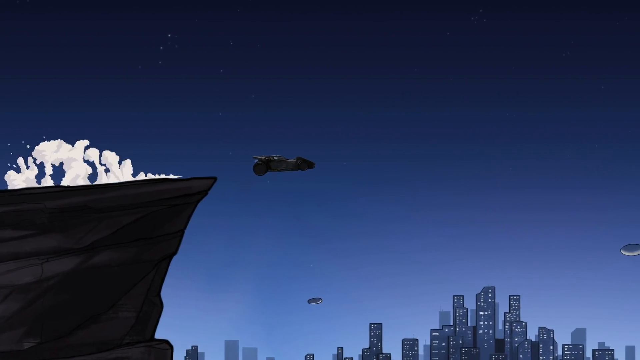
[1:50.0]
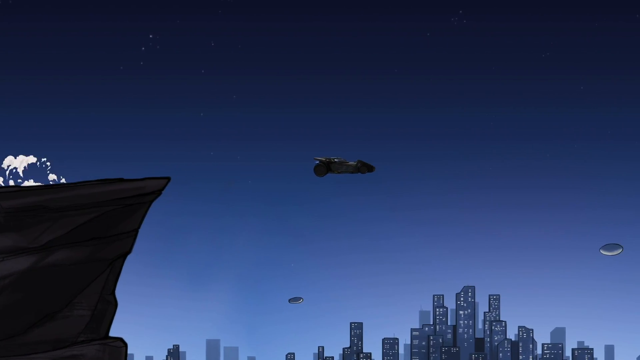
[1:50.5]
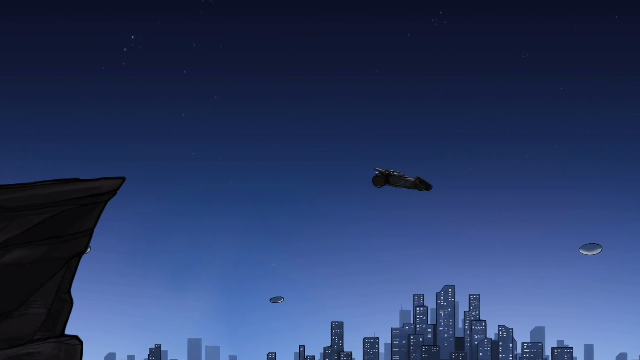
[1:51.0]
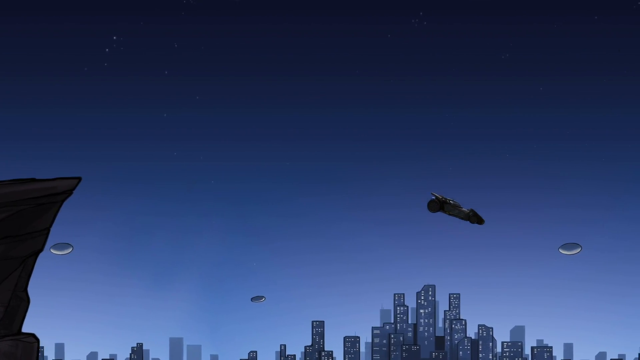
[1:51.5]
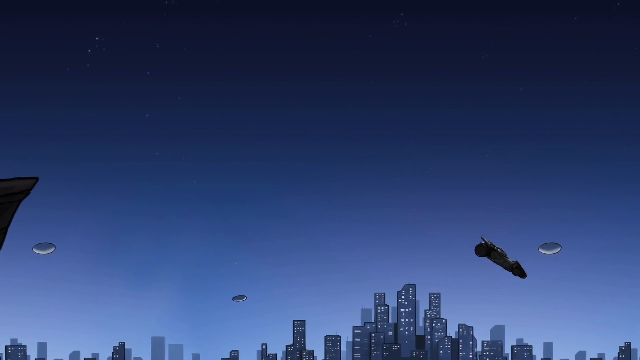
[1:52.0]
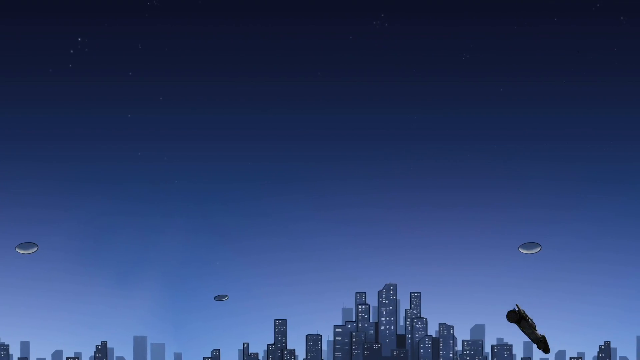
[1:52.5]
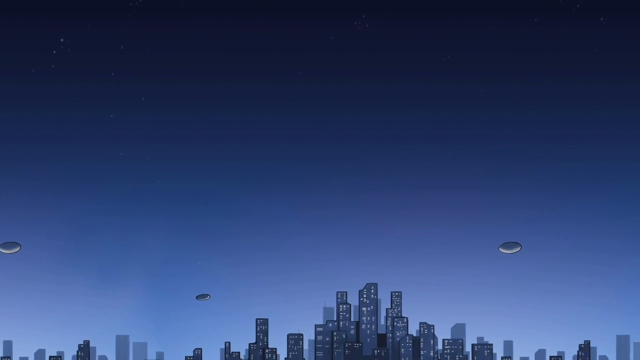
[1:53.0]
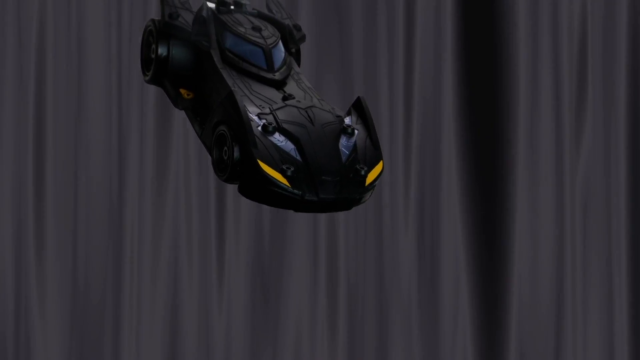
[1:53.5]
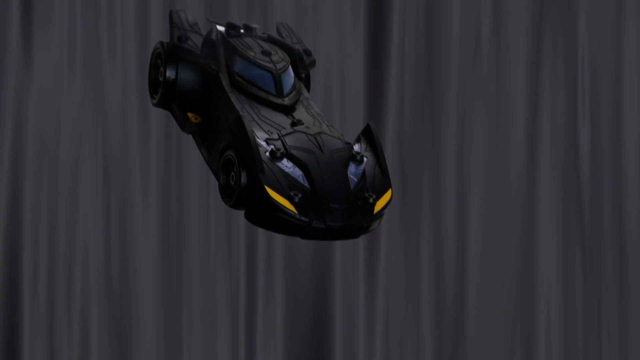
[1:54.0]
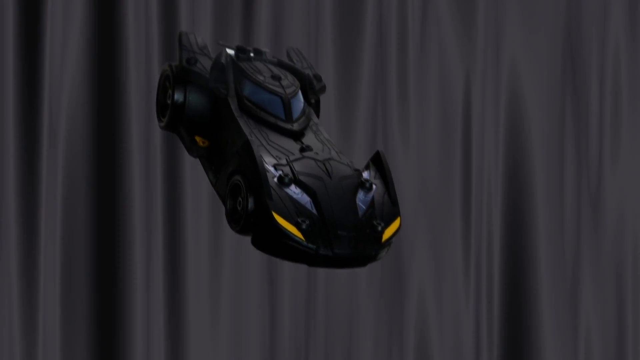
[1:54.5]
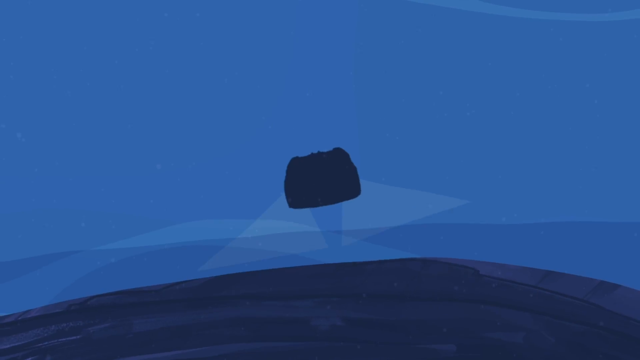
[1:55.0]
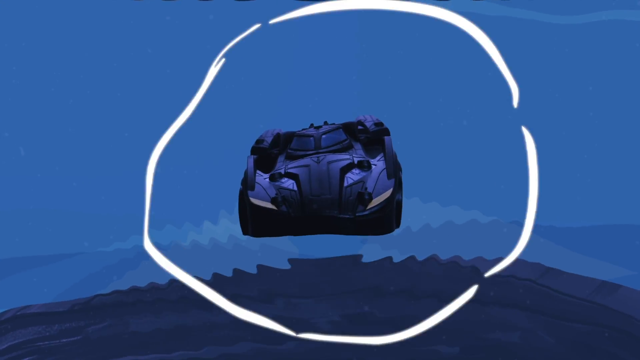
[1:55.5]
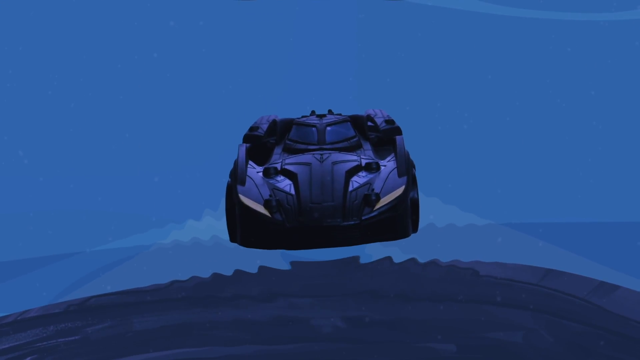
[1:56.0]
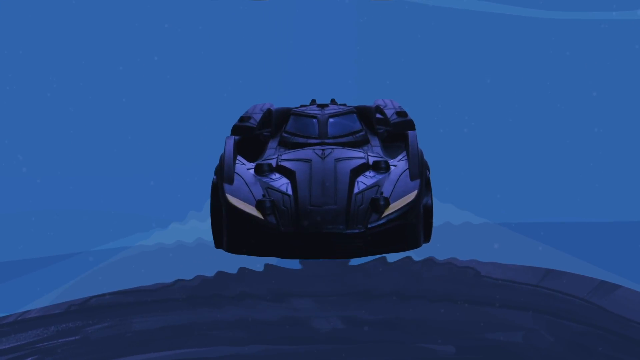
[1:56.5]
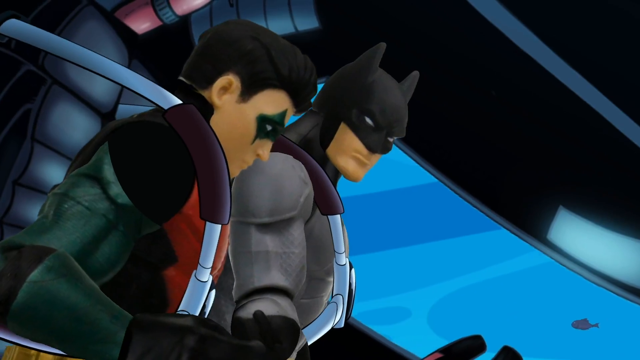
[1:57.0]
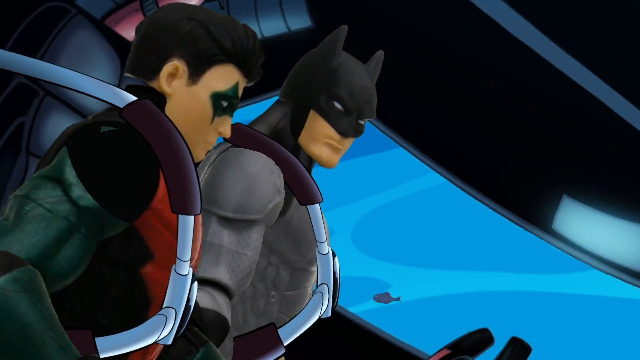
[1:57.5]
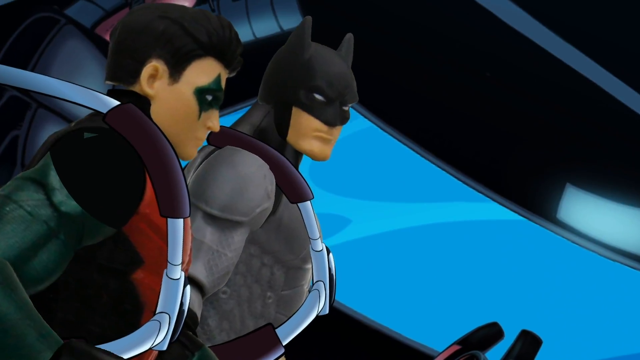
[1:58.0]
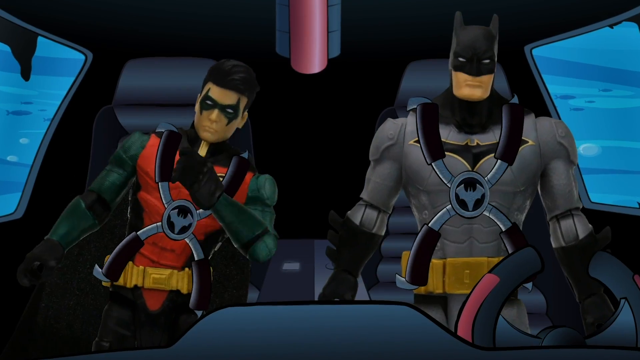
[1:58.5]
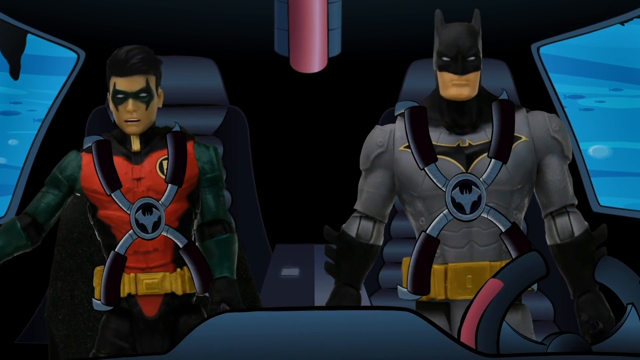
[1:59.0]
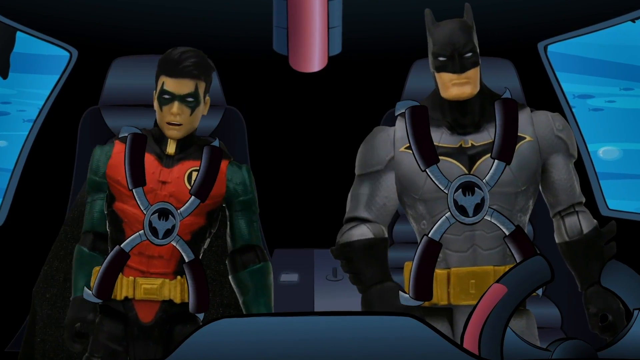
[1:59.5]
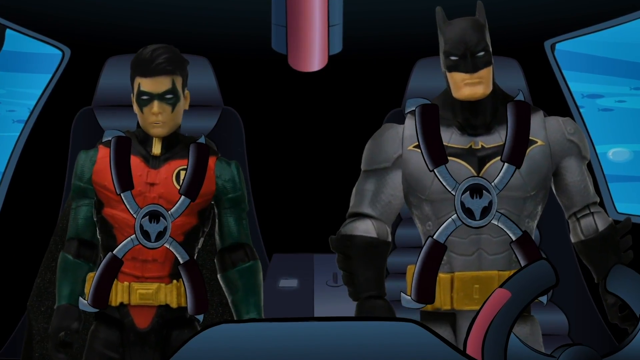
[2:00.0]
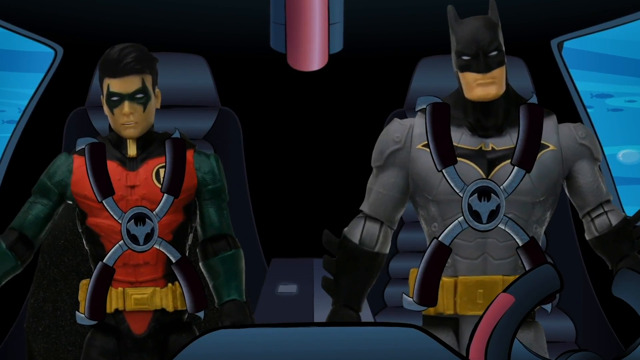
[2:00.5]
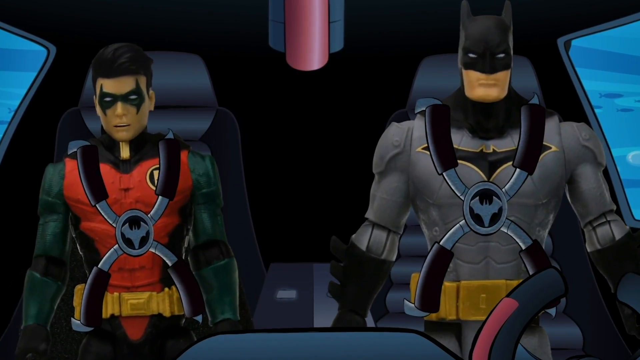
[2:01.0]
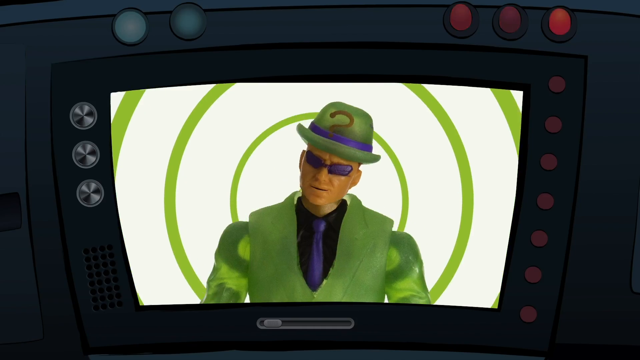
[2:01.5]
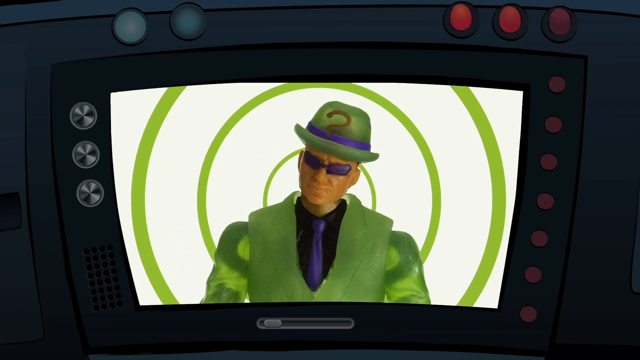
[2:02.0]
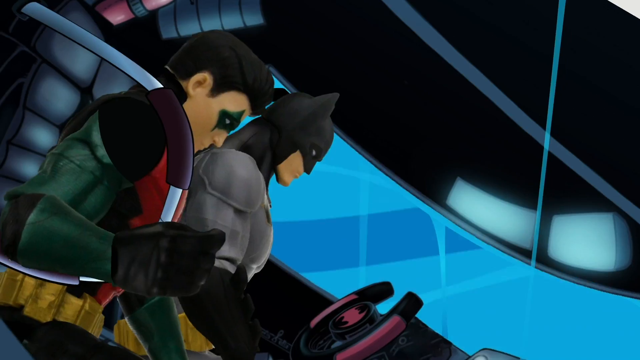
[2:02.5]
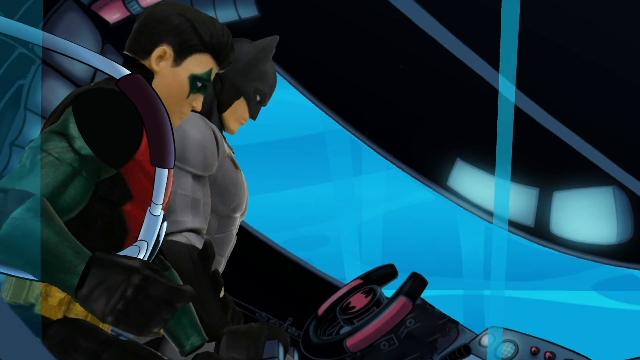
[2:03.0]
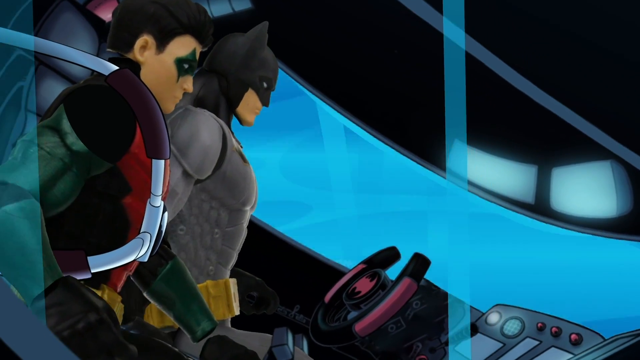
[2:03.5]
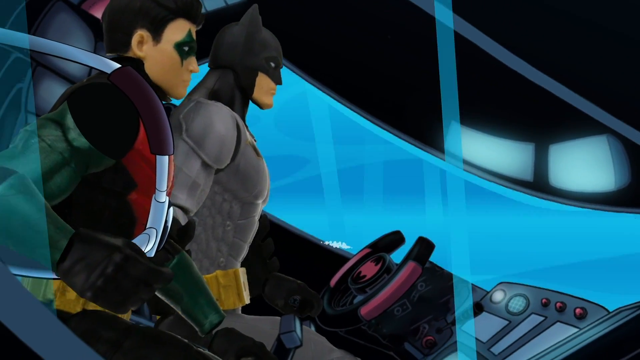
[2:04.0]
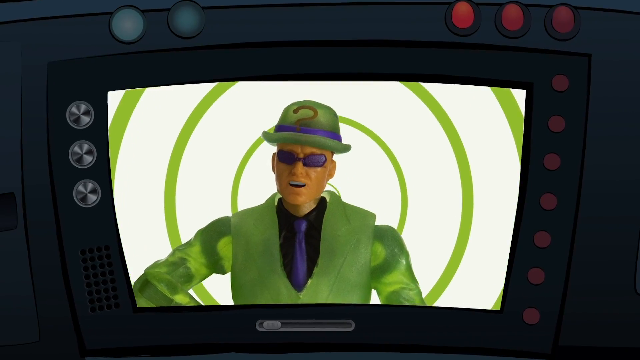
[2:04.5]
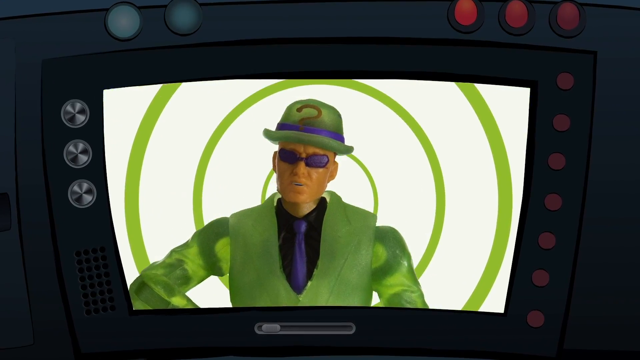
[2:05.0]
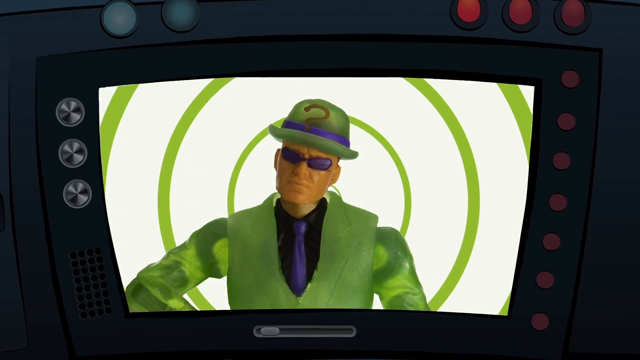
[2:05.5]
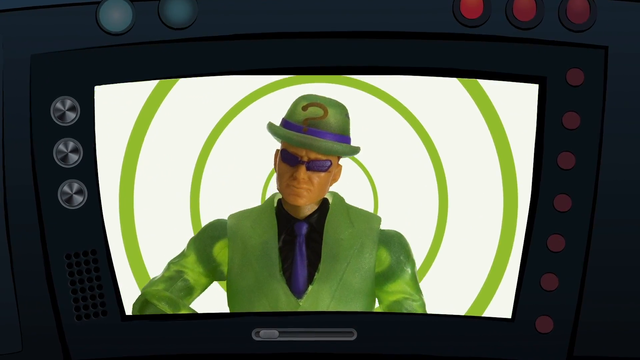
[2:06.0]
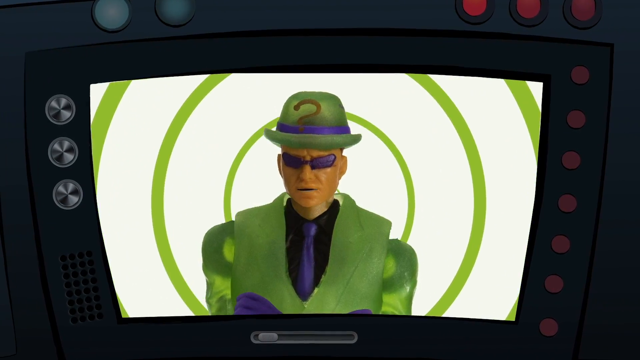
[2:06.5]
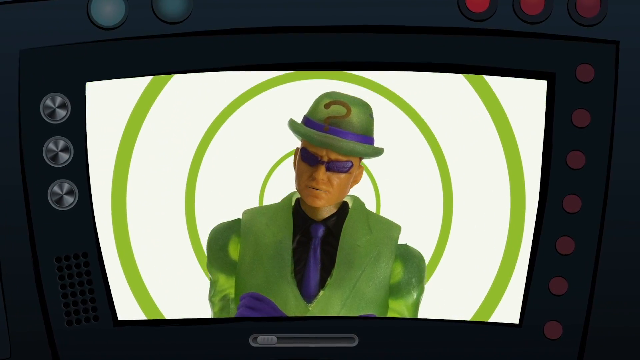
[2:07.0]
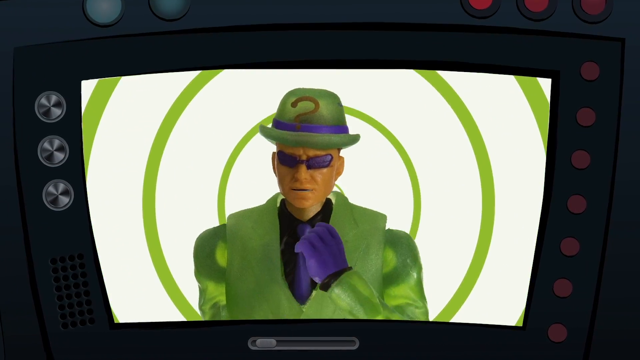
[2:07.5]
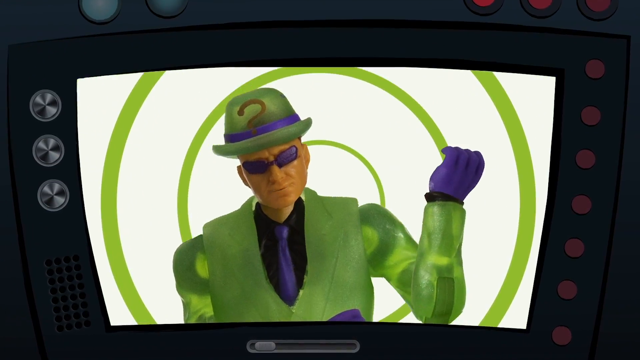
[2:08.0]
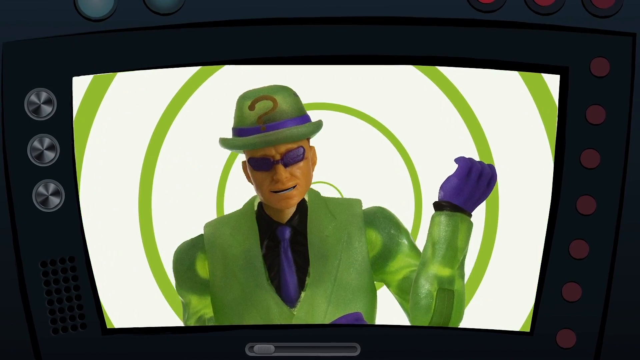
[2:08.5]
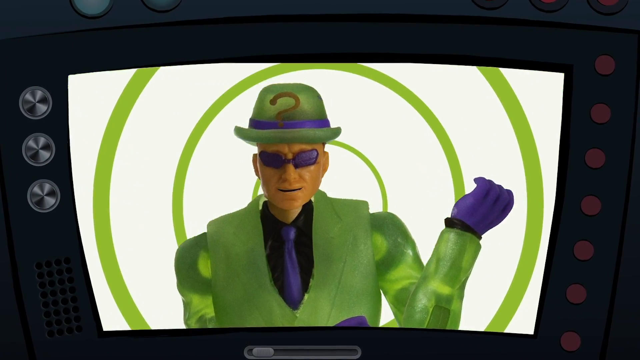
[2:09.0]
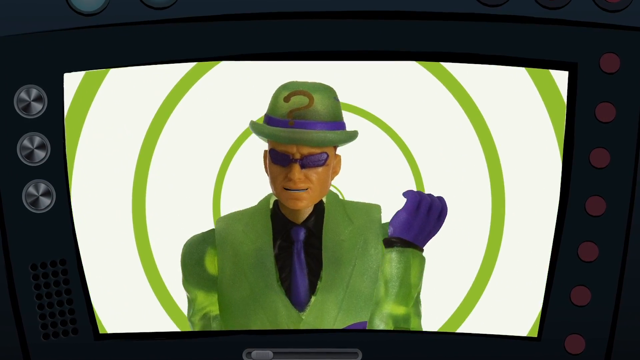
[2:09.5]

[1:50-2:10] The Batmobile speeds off a cliff, leaving a path of dust, and jumps over it with the Gotham City skyline in the background. It falls straight down. In a scene with a drawn 2D animated background, the car falls quickly and splashes into water. Batman and Robin are in the cockpit; Robin looks kind of concerned while Batman is under control. On the screen, a man in front of a hypnotic green circle background talks to them; he wears a green suit, black shirt, purple tie, purple glasses, and a green hat with a purple stripe and a question mark on it. Water slowly enters the Batmobile after the plunge, and they look concerned as it fills with water.